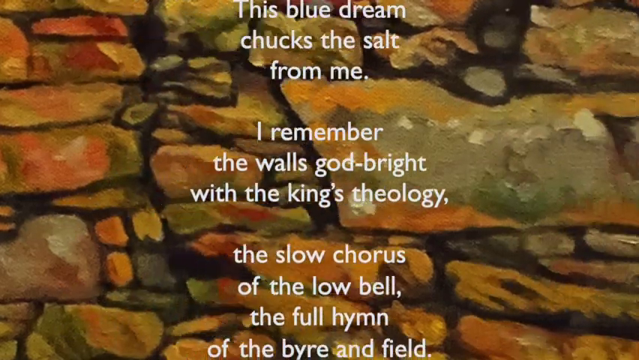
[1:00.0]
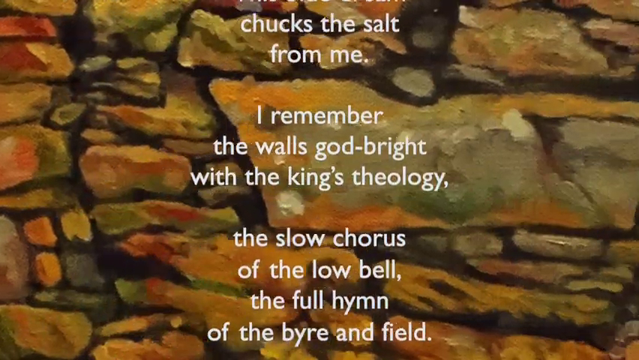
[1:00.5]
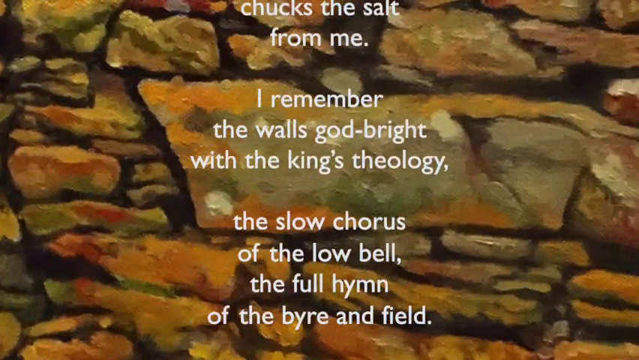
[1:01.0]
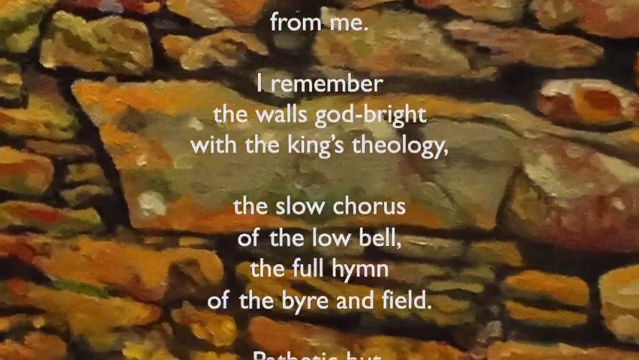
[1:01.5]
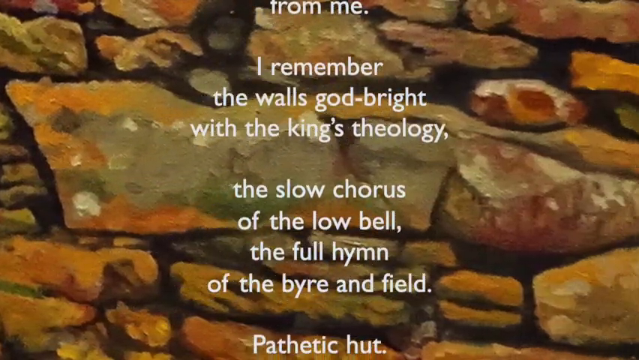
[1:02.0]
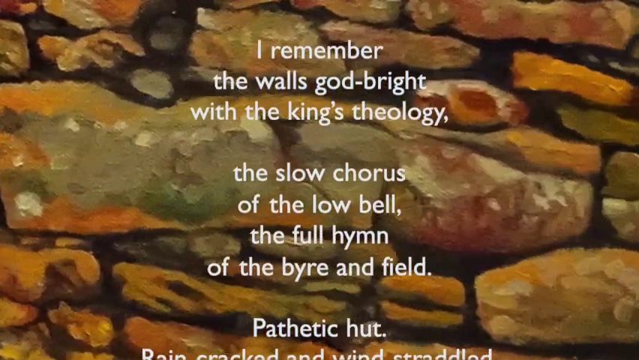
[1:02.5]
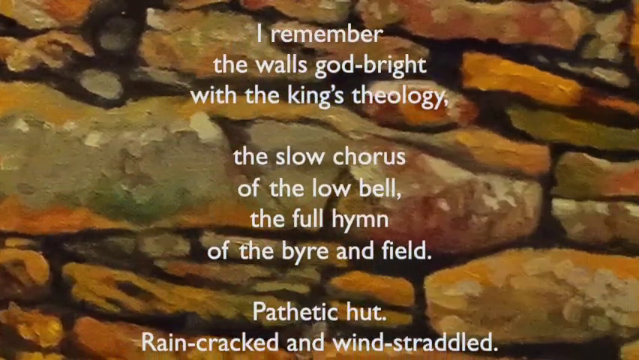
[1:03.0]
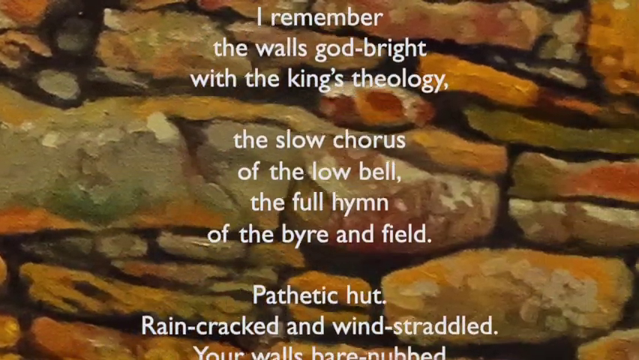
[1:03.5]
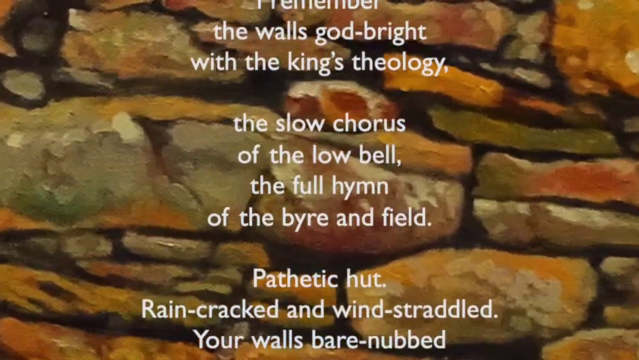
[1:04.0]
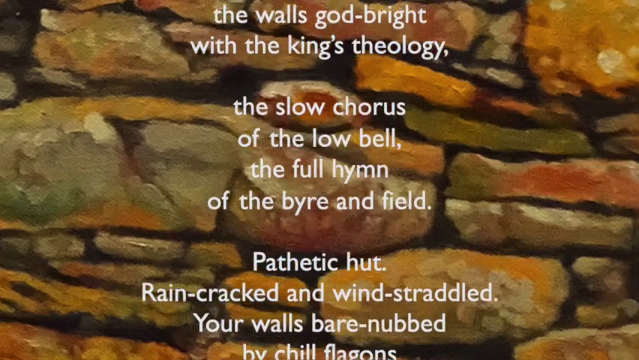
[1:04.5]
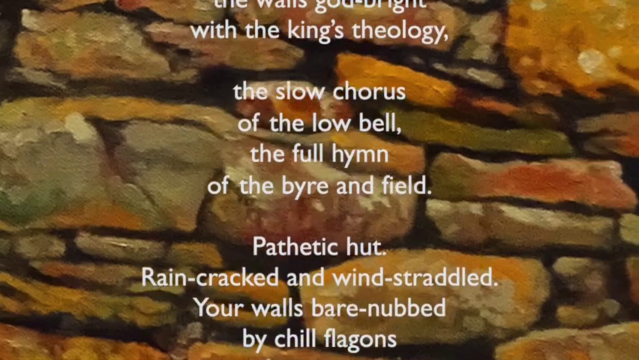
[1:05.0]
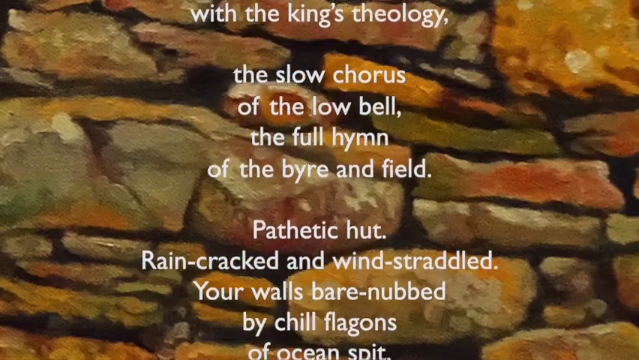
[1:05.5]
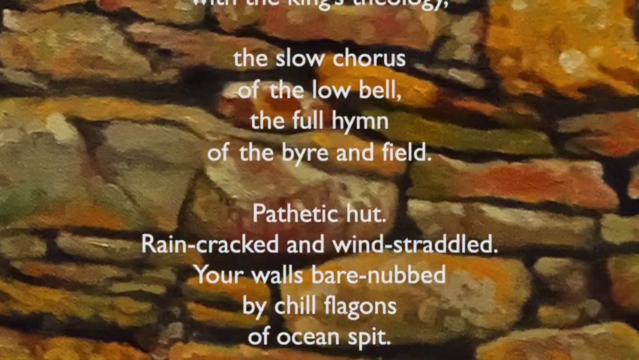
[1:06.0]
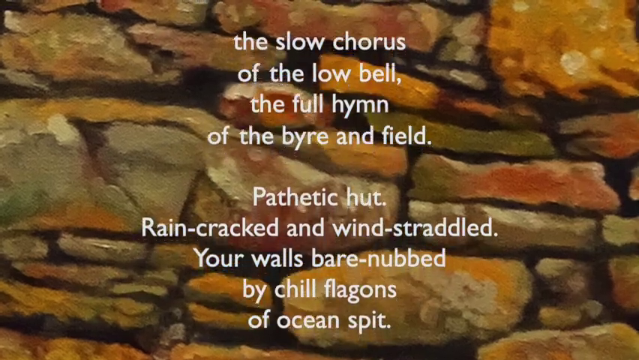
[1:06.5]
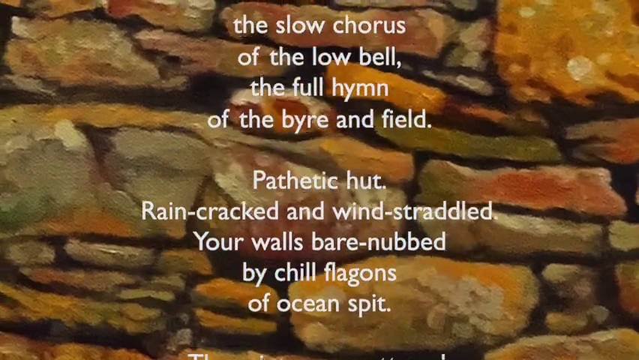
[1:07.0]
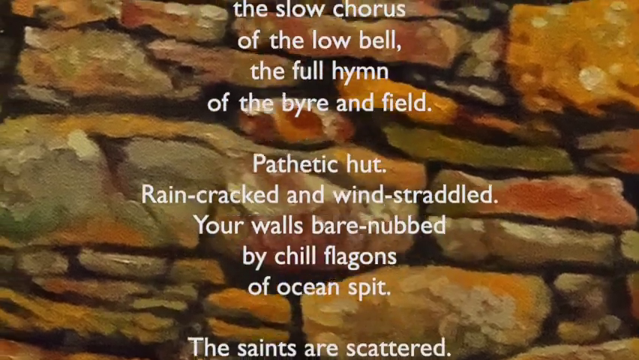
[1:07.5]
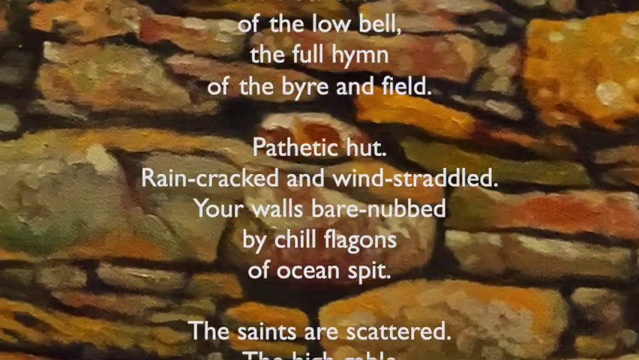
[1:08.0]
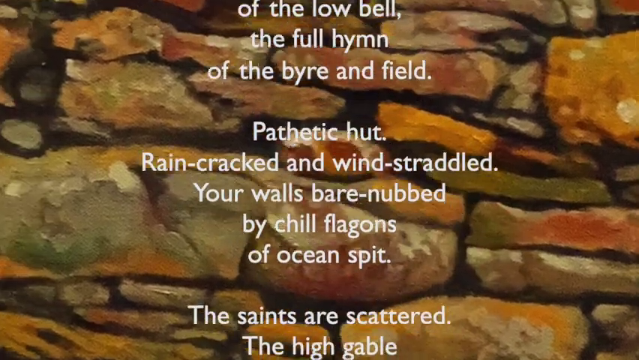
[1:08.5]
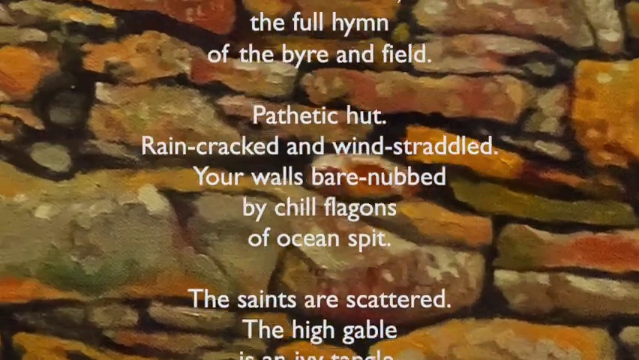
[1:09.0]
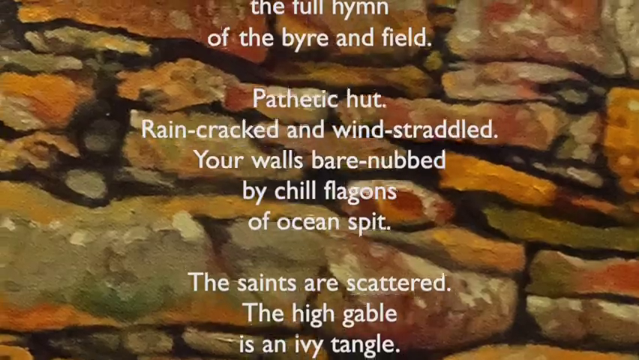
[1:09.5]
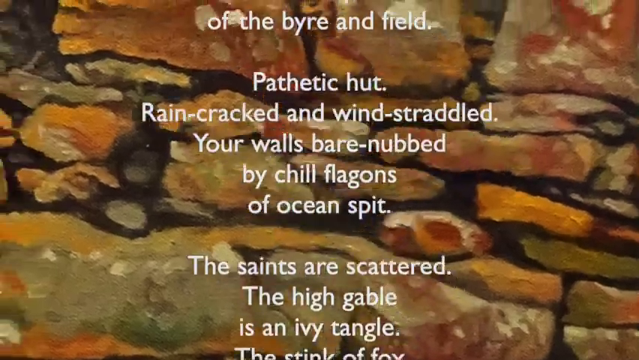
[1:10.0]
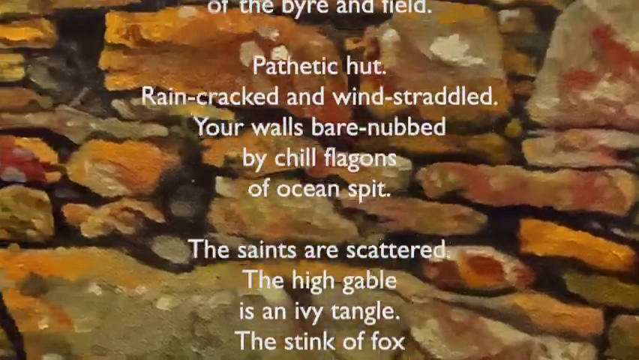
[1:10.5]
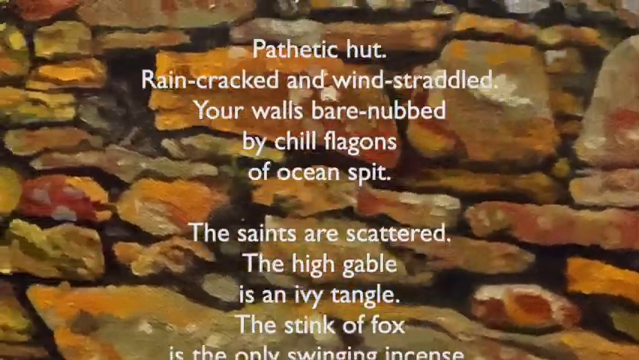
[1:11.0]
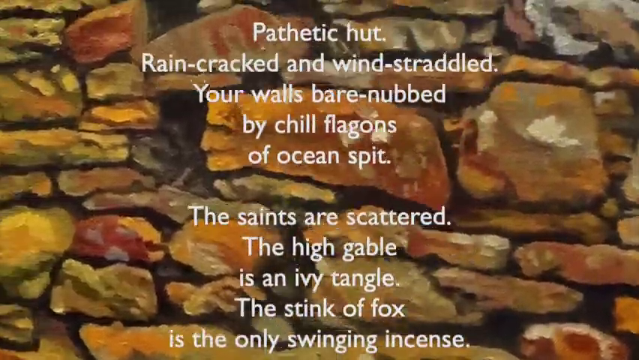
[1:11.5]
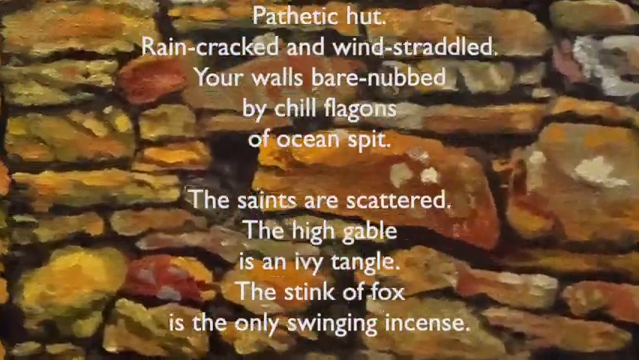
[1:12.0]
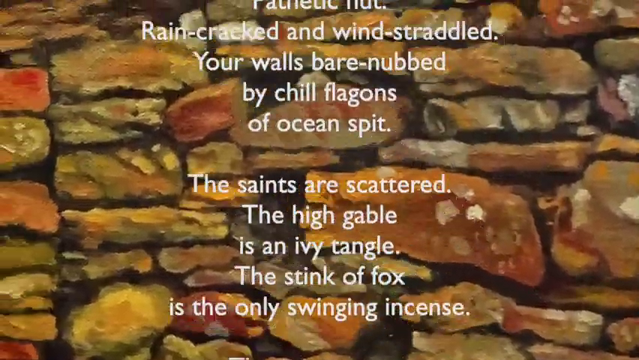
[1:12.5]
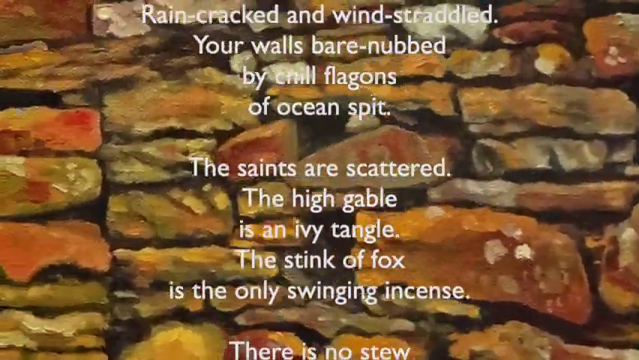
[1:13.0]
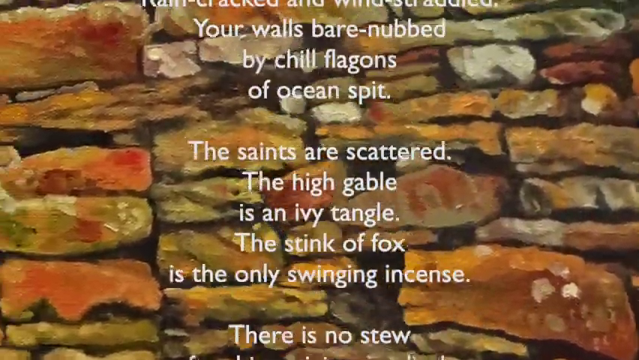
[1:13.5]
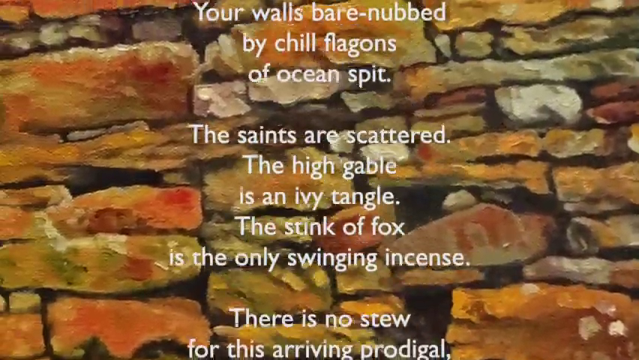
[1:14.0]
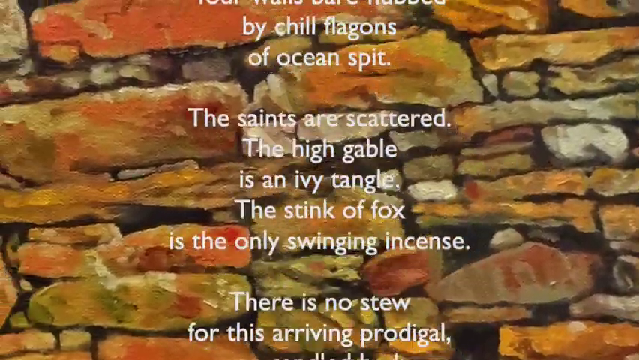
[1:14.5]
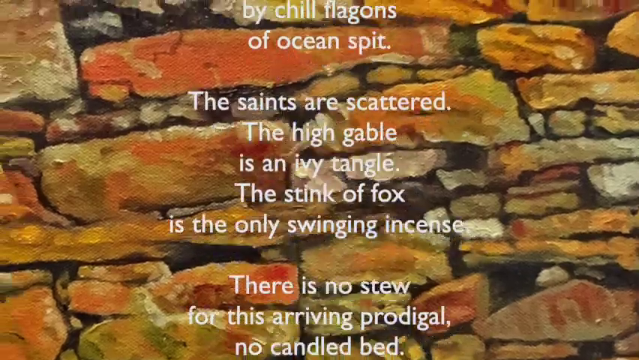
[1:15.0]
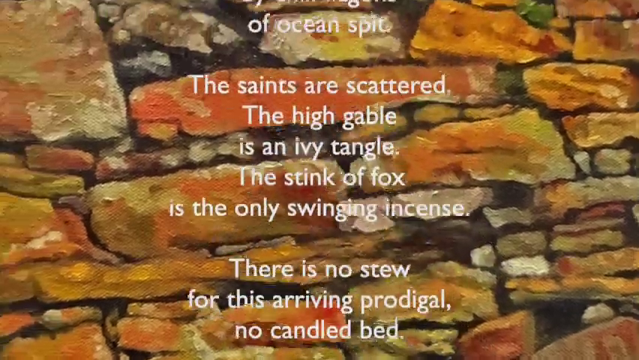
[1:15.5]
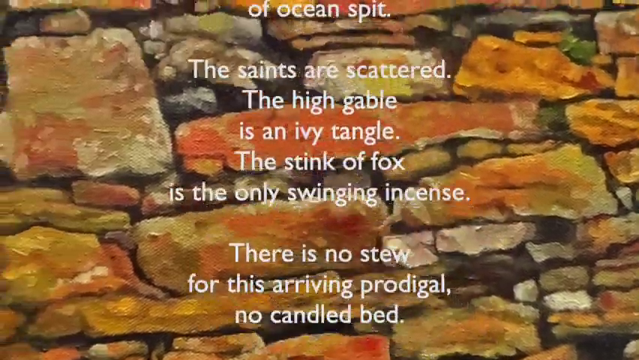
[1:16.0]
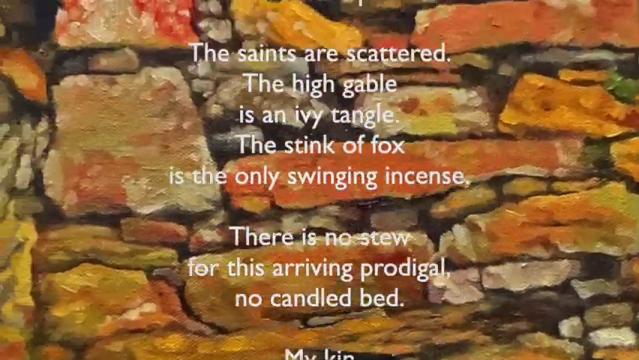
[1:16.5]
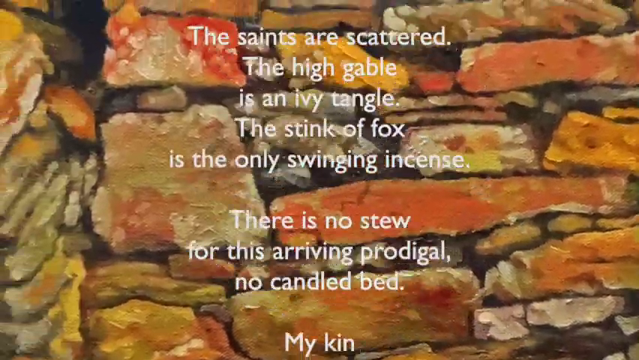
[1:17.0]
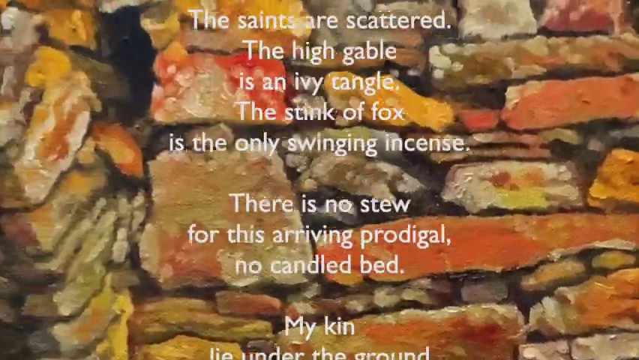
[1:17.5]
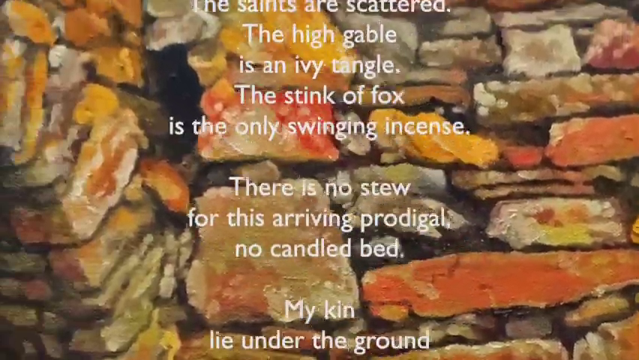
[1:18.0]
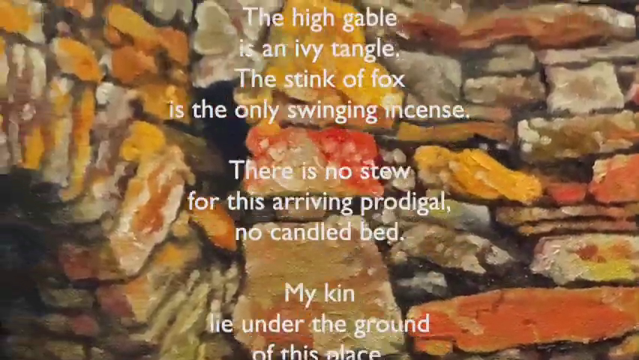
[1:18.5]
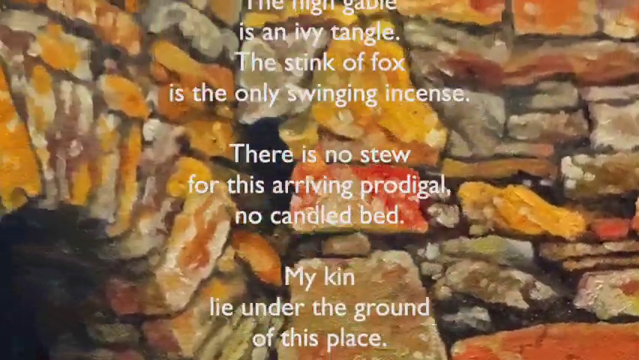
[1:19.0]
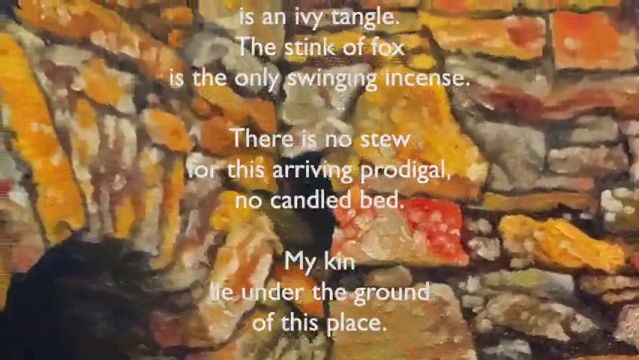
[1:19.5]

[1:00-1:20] The poem continues over a close-up of the cobblestone wall: "I remember the walls got bright with the king's theology. The slow chorus of the low bell. The full hymn of the briar and field. Pathetic hut. Rain cracked and wind straddled. Your walls bare nubs by chill flagons of ocean spit. The saints are scattered. The high gable is an ivy tangle. The stink of fox is the only swinging incense. There is no stew for this arriving prodigal. No candle bed. My kin lie under the ground of this place." The cobblestones are a reddish yellow color with some grays mixed in, and the lines between them are visible. The white lettering of the poem is centered and moves from the bottom to the top.